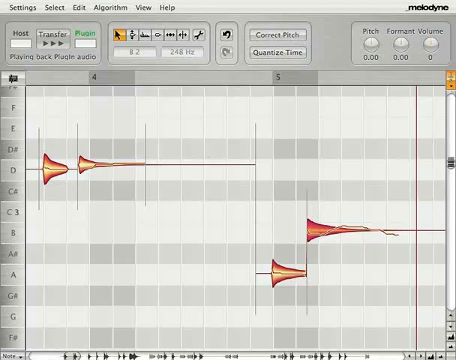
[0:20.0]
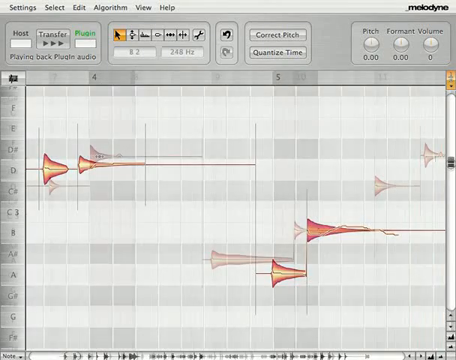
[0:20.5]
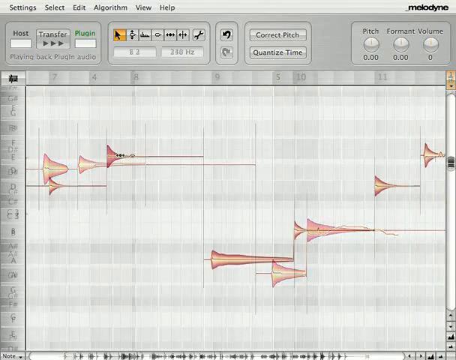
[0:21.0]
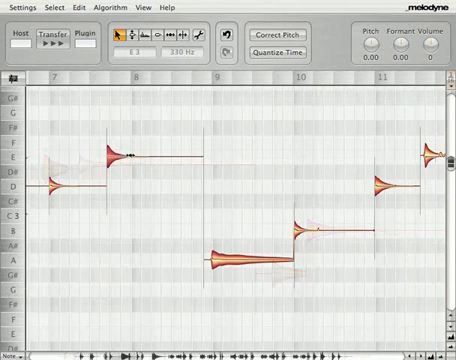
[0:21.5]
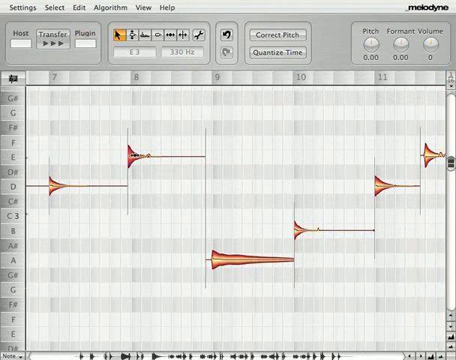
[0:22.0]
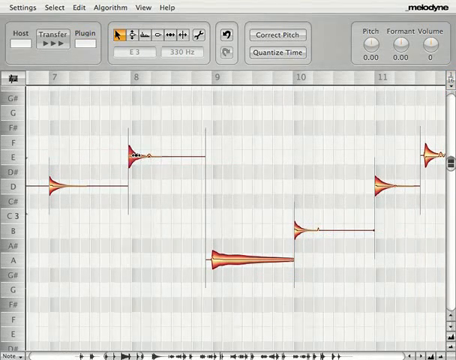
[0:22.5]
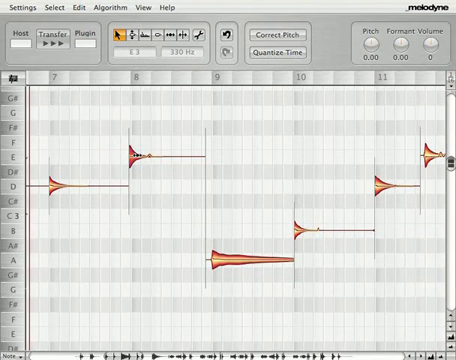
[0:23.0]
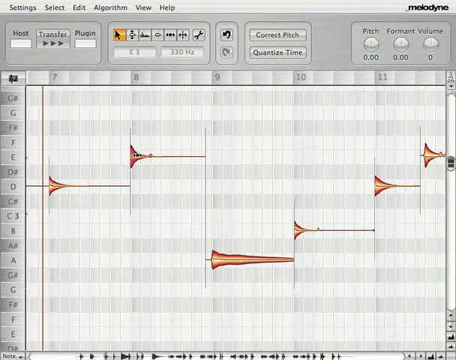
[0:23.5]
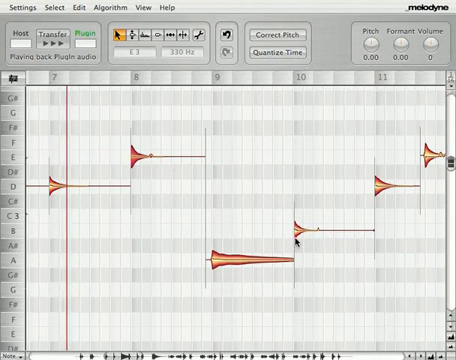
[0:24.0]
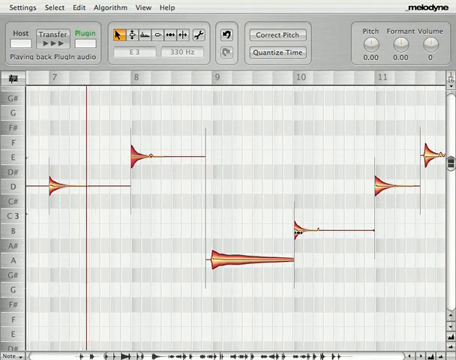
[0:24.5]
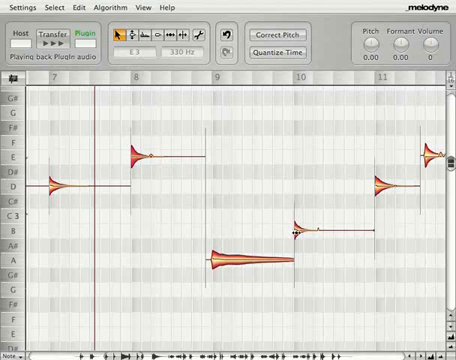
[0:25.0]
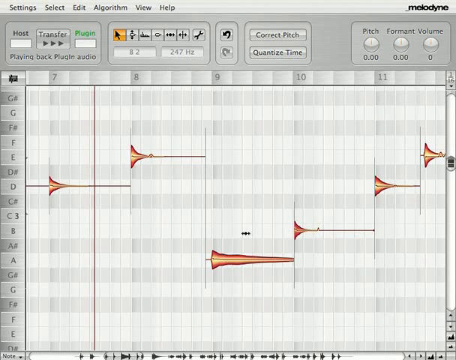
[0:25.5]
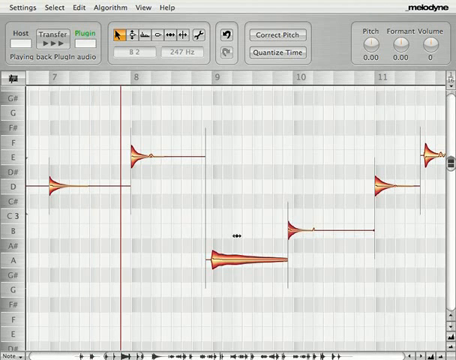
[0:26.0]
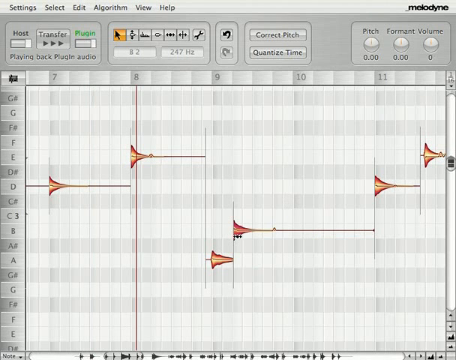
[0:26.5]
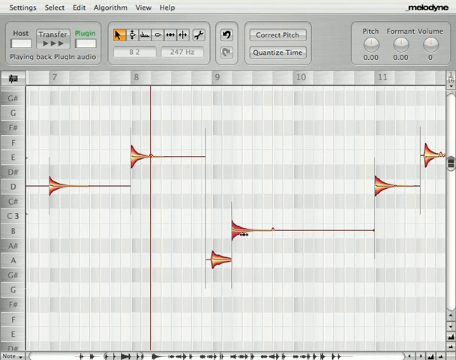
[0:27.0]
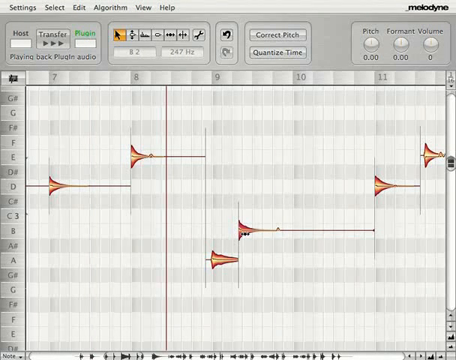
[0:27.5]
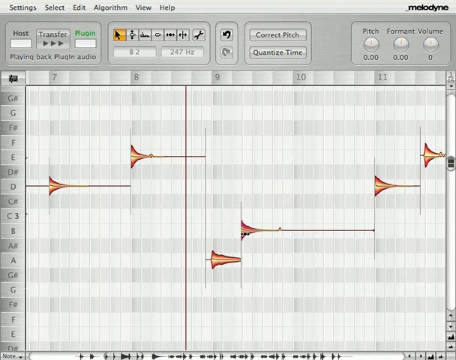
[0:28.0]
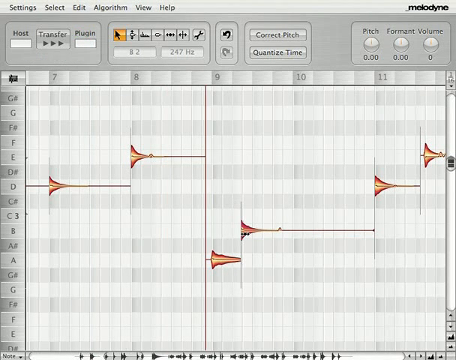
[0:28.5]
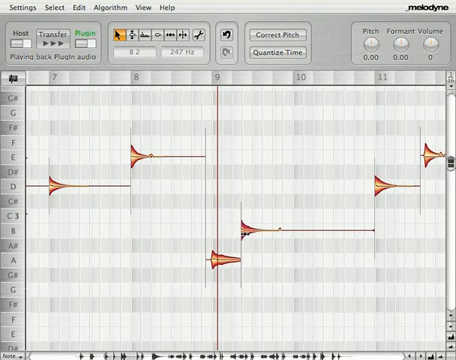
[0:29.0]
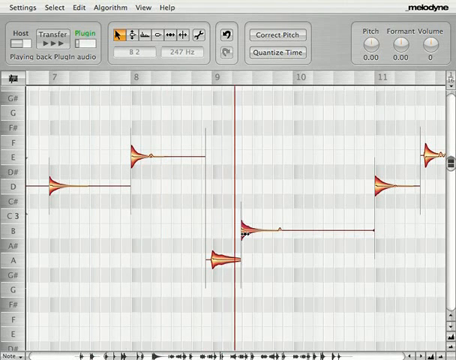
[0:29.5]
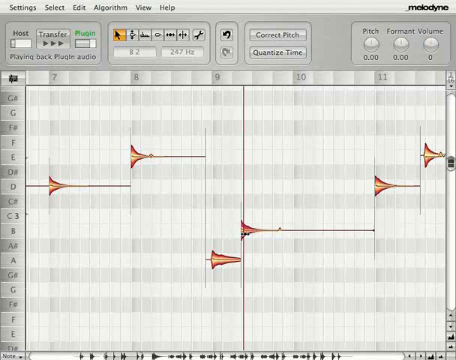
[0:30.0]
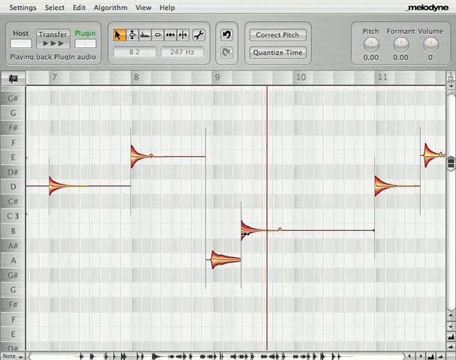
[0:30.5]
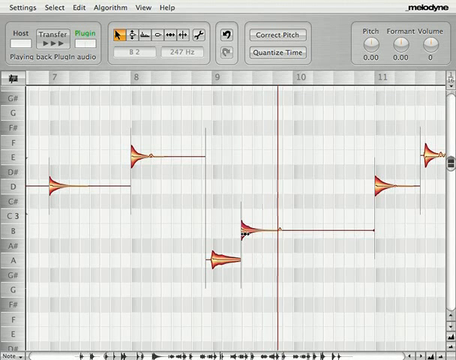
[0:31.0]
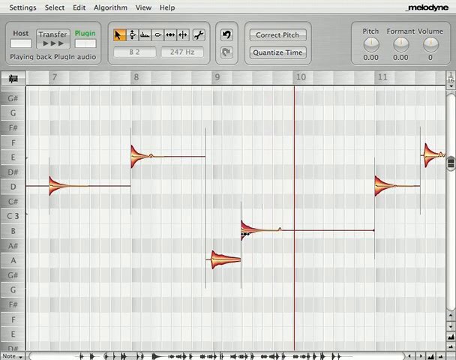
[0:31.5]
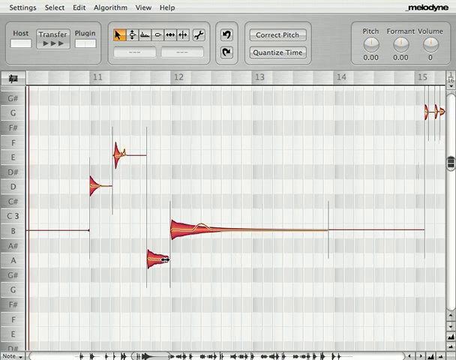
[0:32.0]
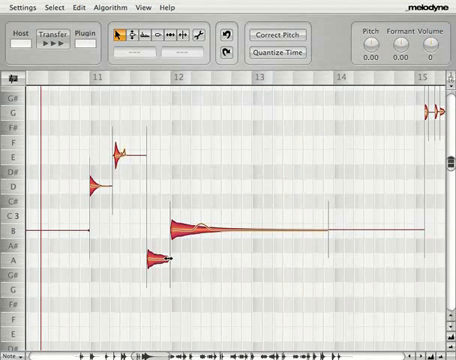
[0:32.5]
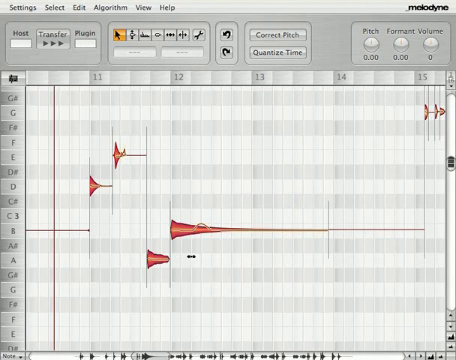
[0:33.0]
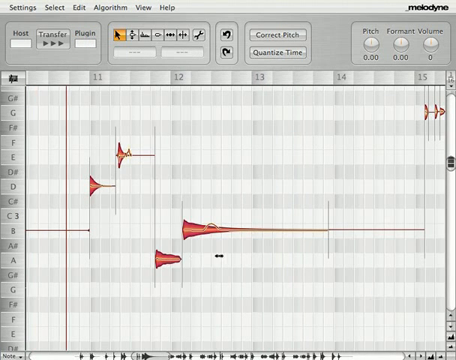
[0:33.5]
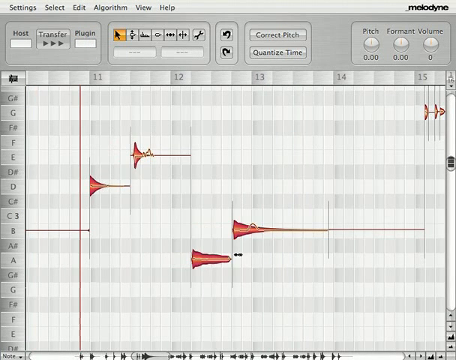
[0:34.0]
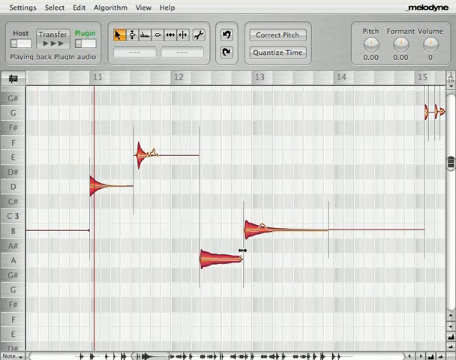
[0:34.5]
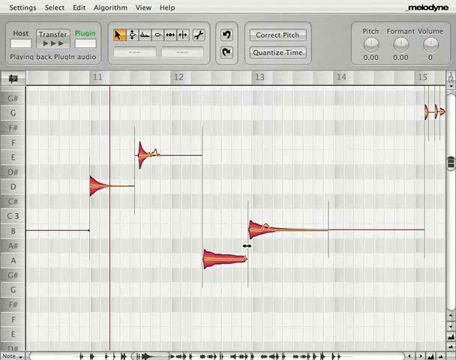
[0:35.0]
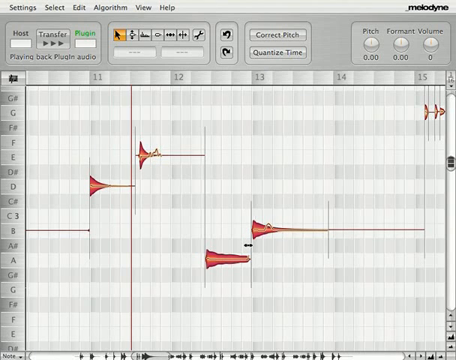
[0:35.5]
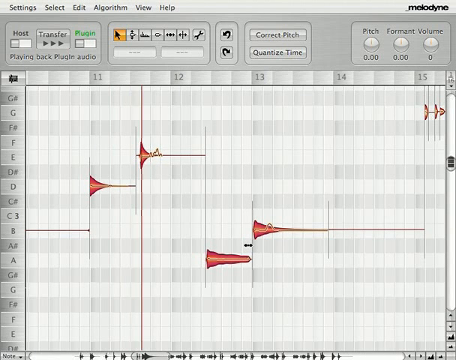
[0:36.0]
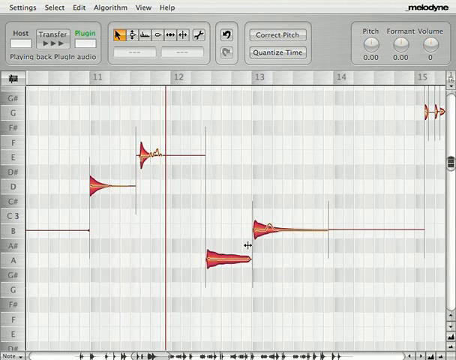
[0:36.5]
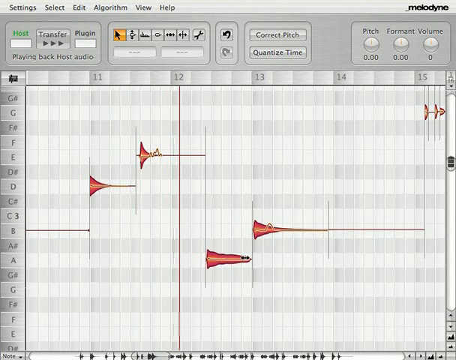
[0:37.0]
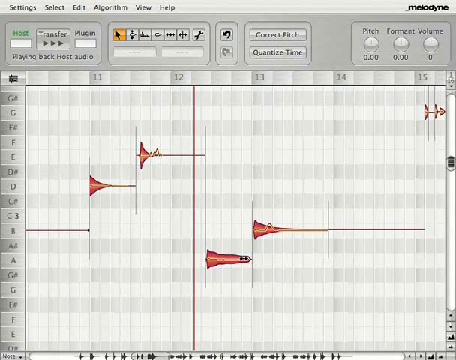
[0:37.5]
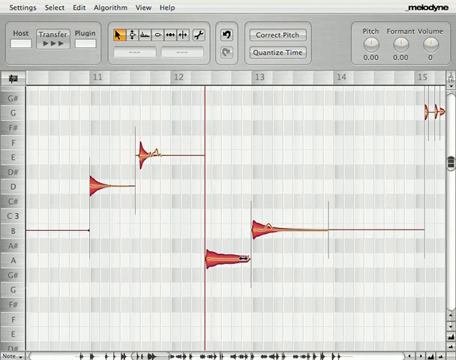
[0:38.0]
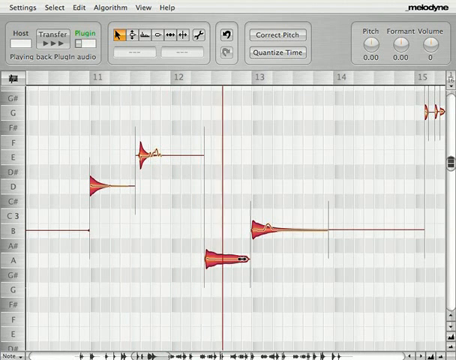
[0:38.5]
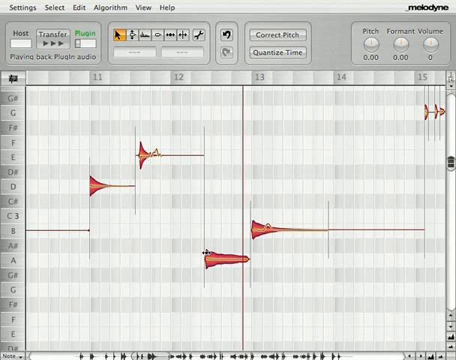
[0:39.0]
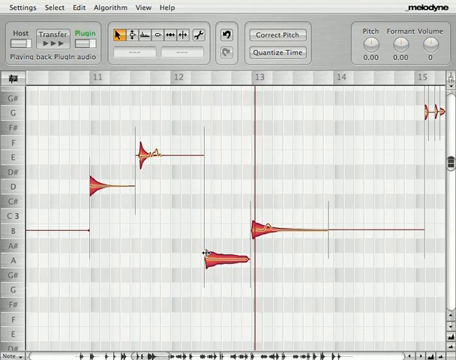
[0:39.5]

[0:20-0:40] The Melodyne software stays on screen. The user seems to be altering the length of the notes, using the mouse to compress the notes shown, pulling cells in the grid closer to one another to compress them, and also lengthening them. The notes themselves apparently are not changed.